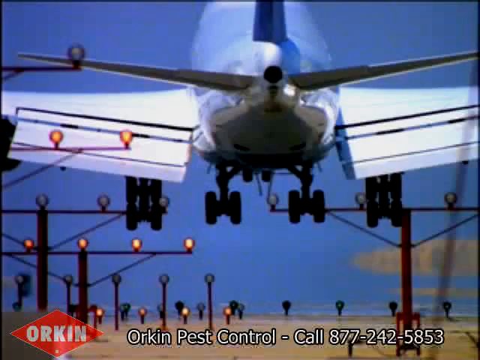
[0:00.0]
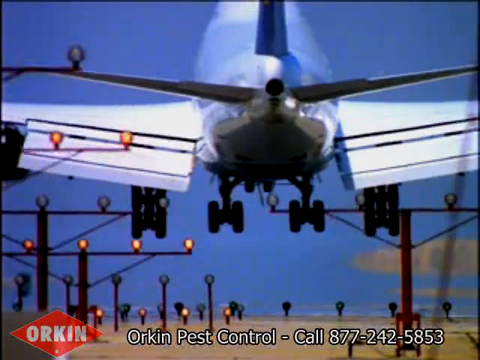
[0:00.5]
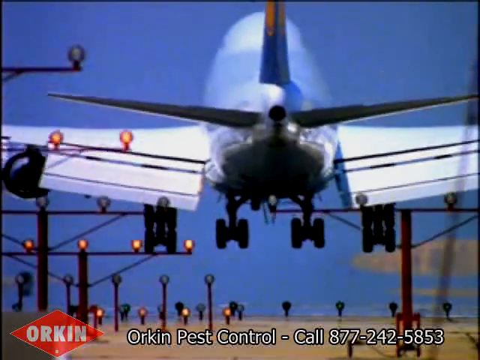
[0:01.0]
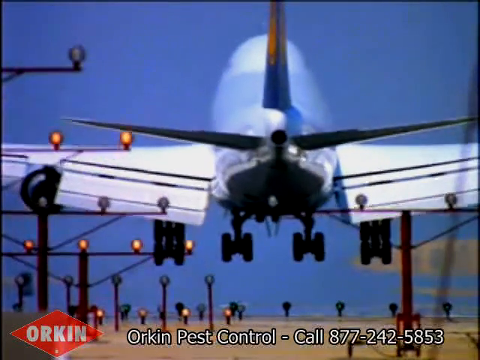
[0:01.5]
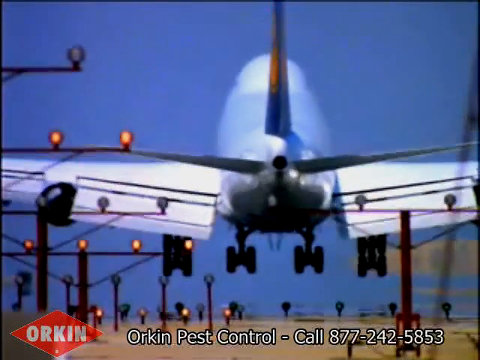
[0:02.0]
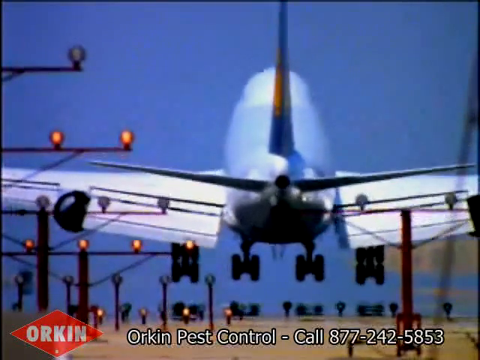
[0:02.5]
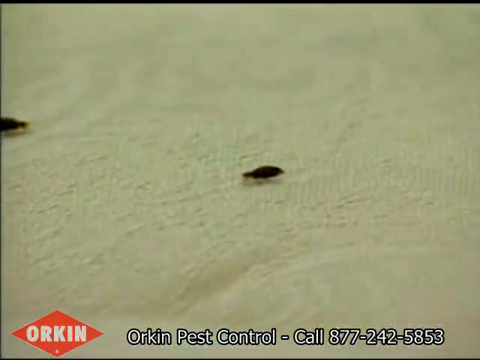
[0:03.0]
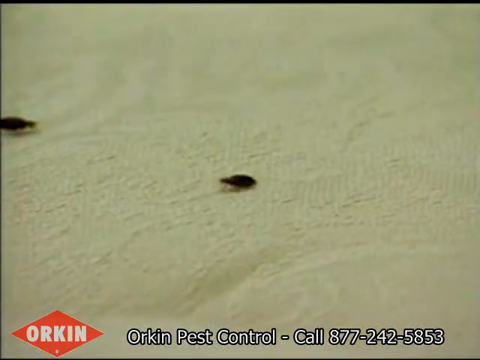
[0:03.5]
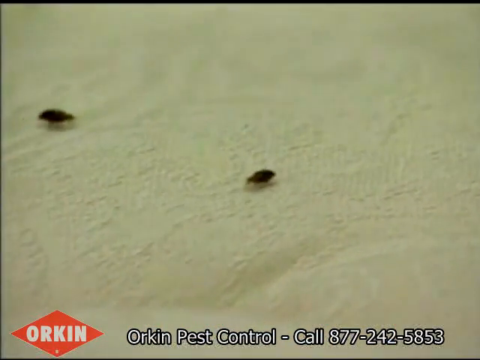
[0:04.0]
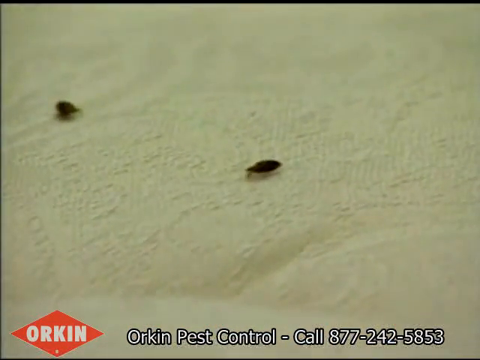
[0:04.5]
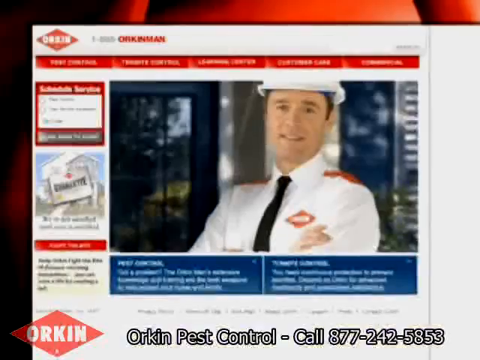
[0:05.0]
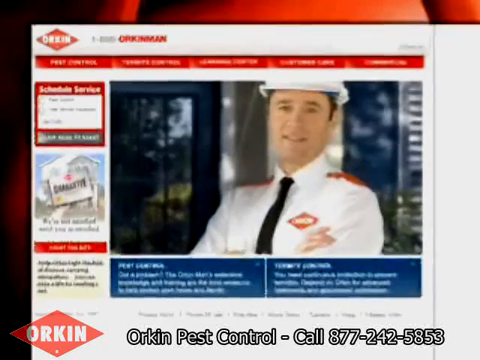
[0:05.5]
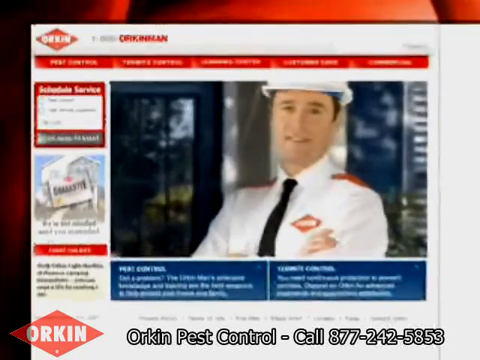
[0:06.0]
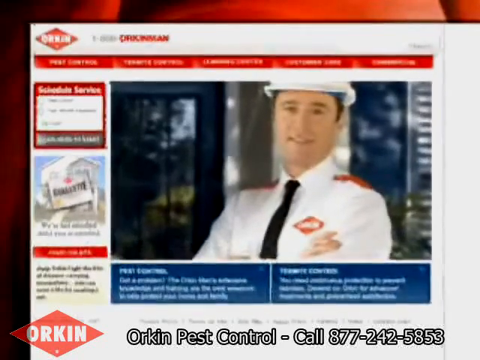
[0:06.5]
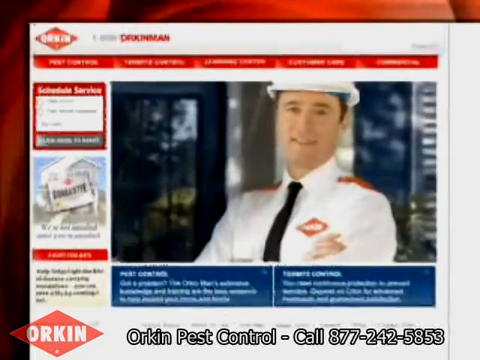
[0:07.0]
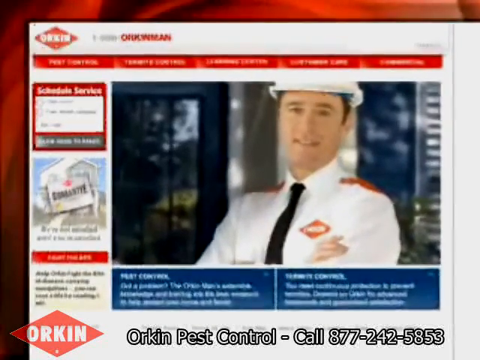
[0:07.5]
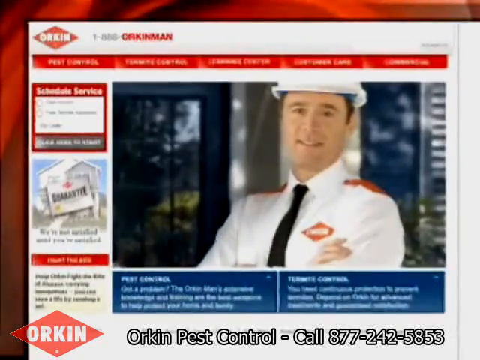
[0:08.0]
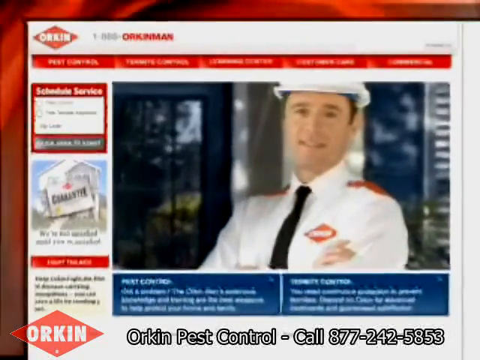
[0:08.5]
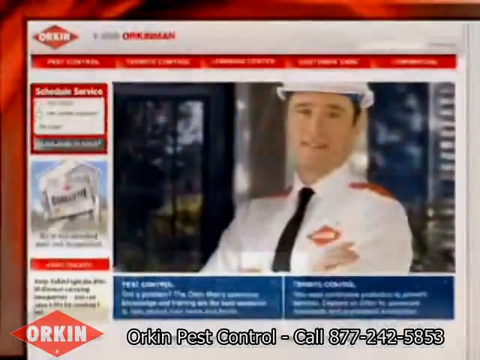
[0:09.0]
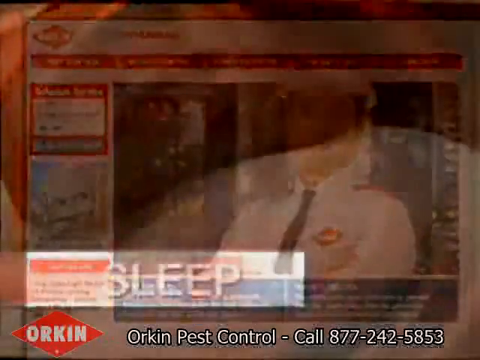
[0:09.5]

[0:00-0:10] A view shows what look like telephone lines or something similar, and an airplane seems to be coming down on the runway at the bottom of the frame. A red diamond logo is on screen along with text reading "Orkin pest control" and a number to call. The airplane is seen from the back, with its sets of wheels visible. The video then moves to a wall with a few different bugs moving around. A very blurred shot follows, showing the Orkin website, which is hard to read. A man in a hard hat, apparently with Orkin, has his arms folded and looks toward the camera as the shot zooms in briefly. The scene then changes to sleep: a woman seems to be trying to sleep, and a man with his eyes closed is trying to sleep while what looks like a single bug is headed to the right of him. The Orkin diamond and the pest control number stay at the bottom of the screen as the ad goes on.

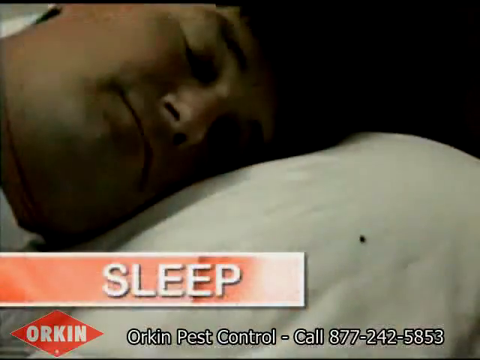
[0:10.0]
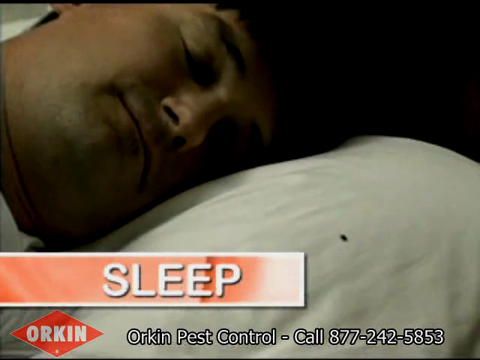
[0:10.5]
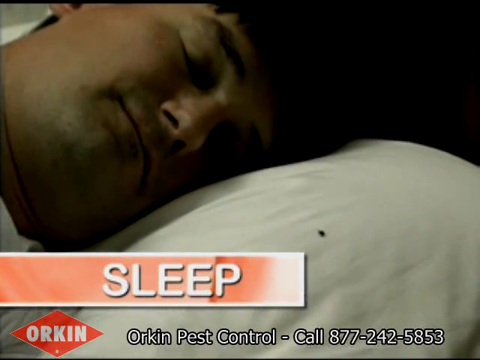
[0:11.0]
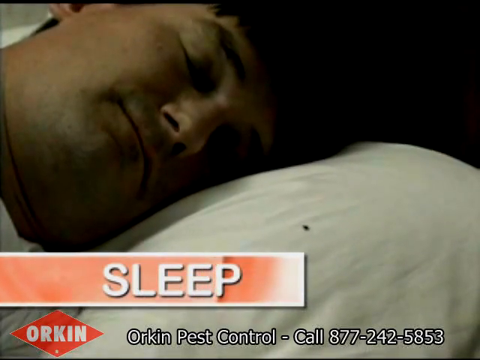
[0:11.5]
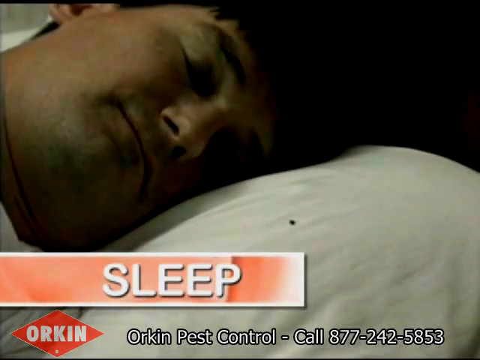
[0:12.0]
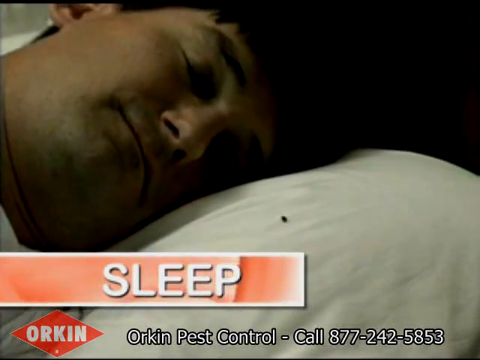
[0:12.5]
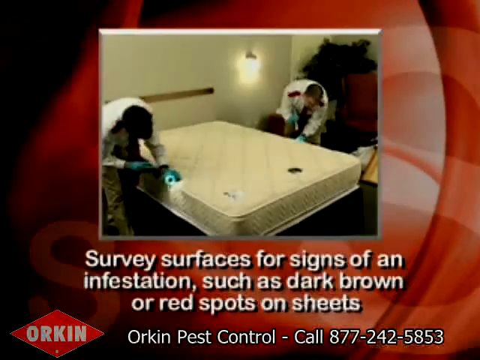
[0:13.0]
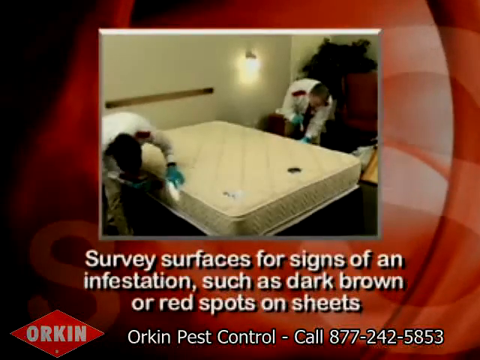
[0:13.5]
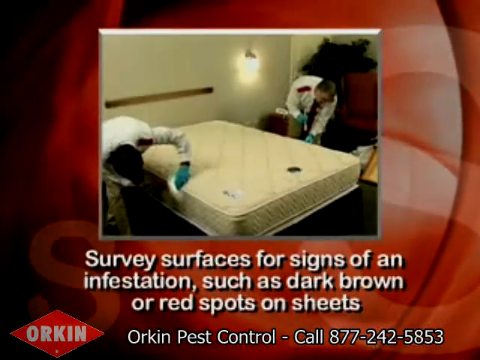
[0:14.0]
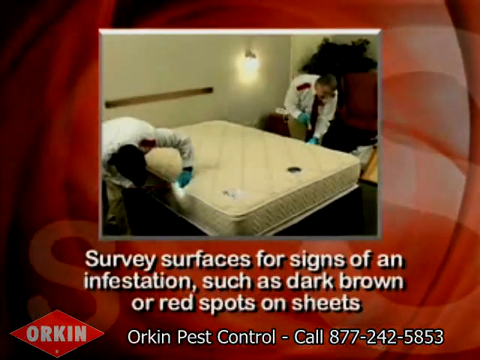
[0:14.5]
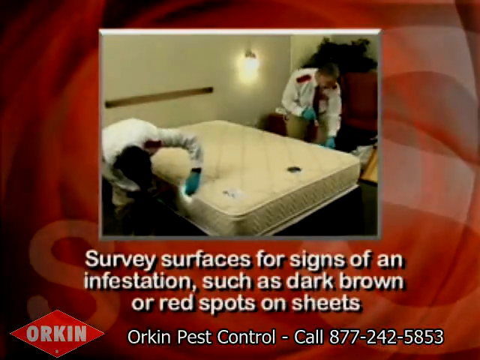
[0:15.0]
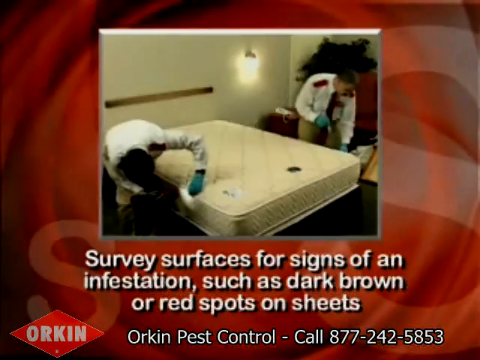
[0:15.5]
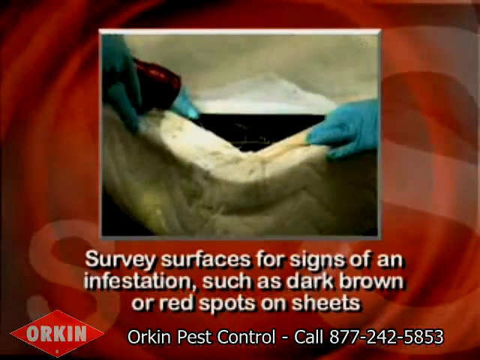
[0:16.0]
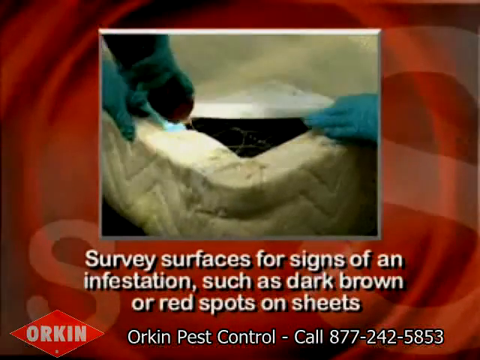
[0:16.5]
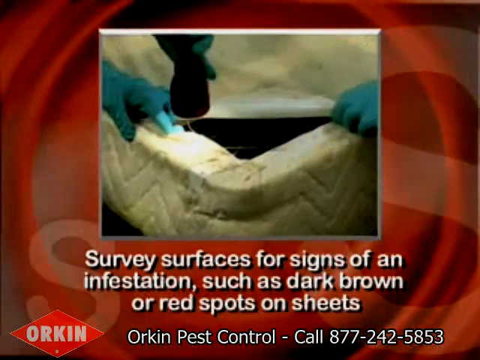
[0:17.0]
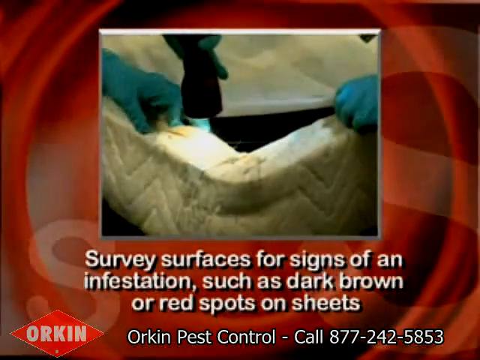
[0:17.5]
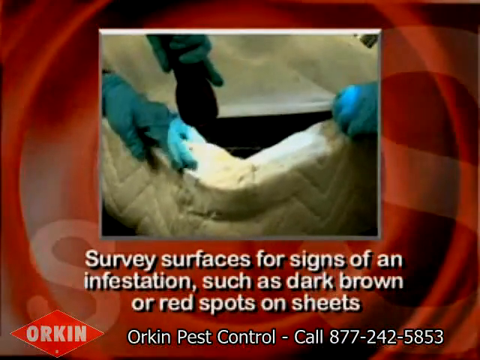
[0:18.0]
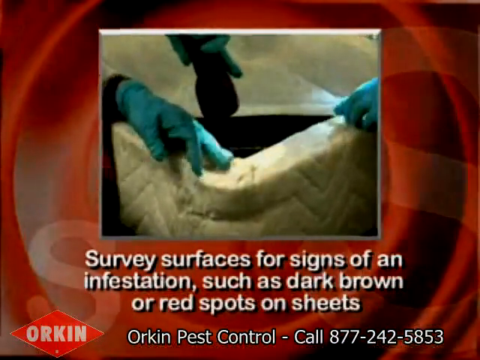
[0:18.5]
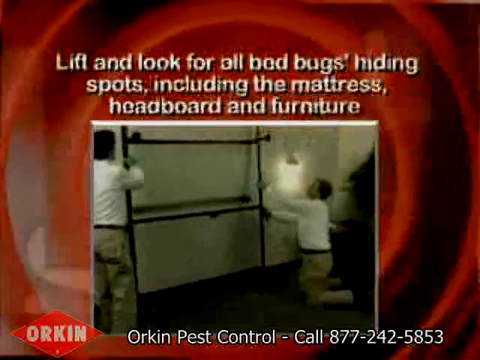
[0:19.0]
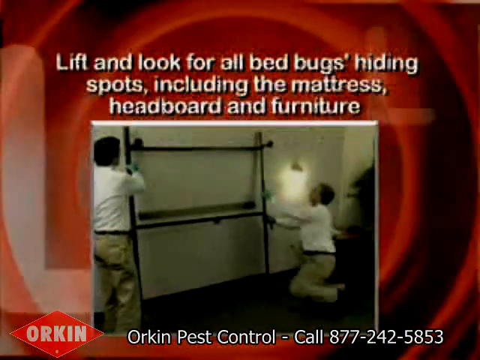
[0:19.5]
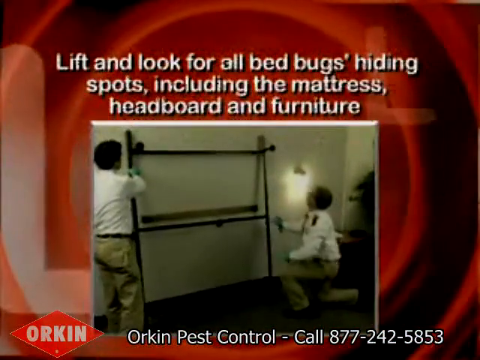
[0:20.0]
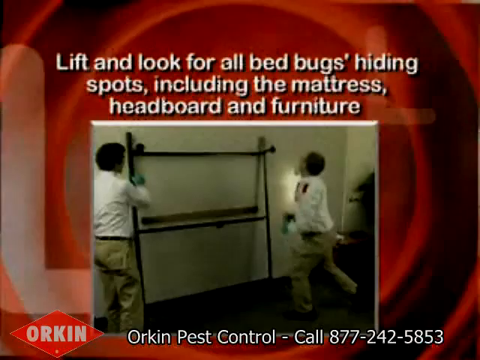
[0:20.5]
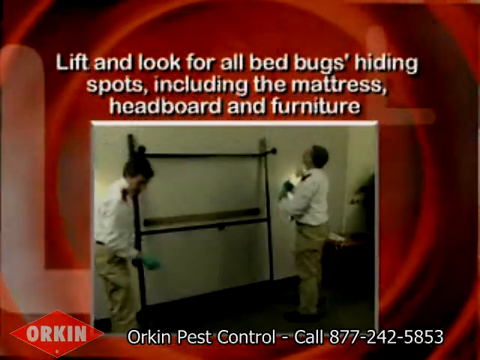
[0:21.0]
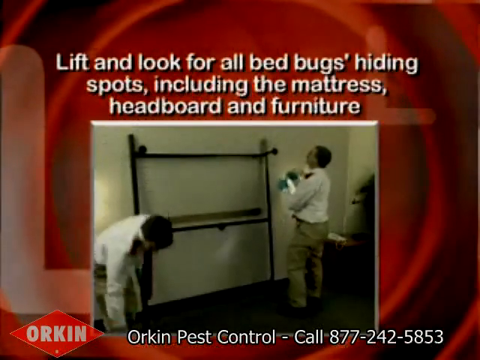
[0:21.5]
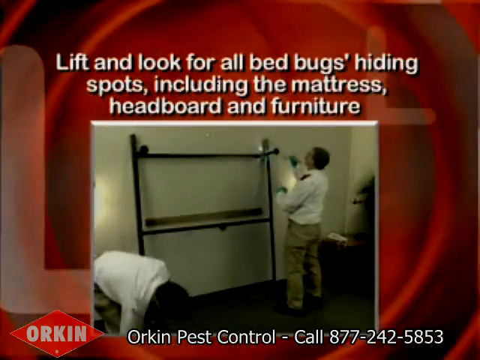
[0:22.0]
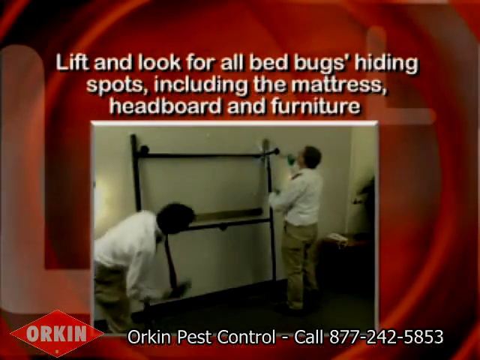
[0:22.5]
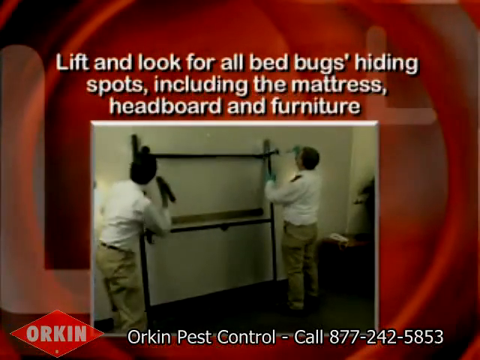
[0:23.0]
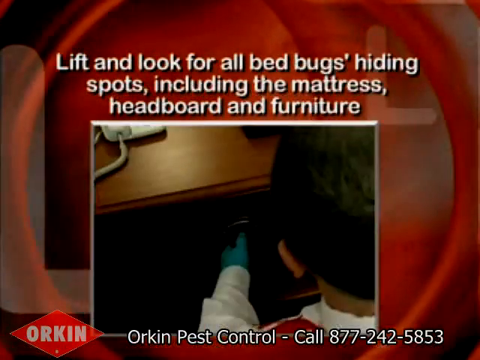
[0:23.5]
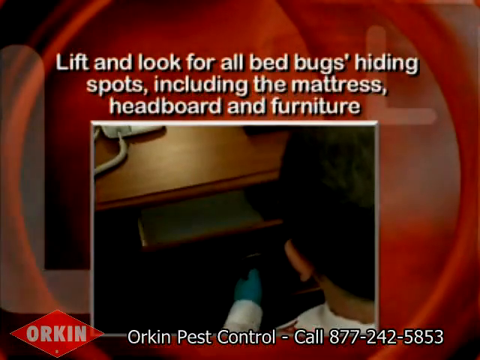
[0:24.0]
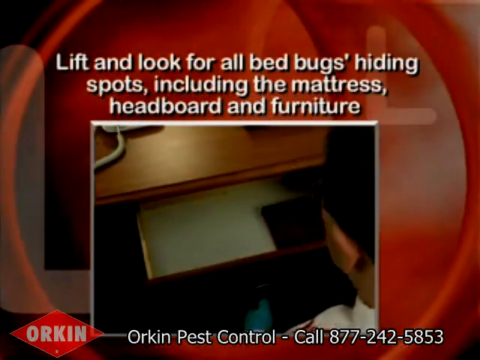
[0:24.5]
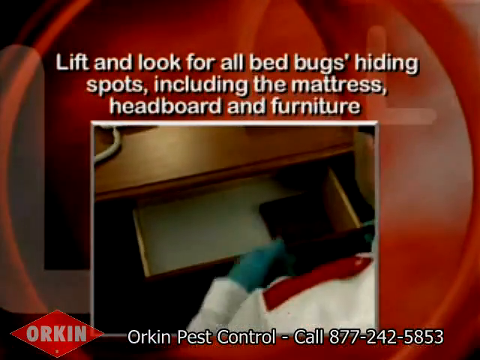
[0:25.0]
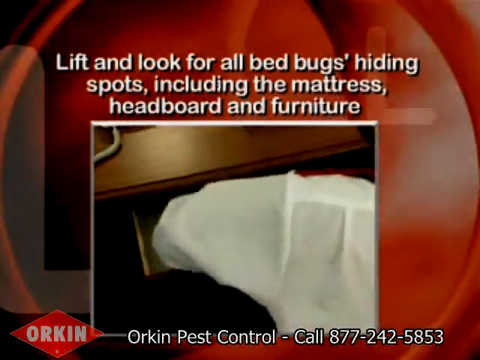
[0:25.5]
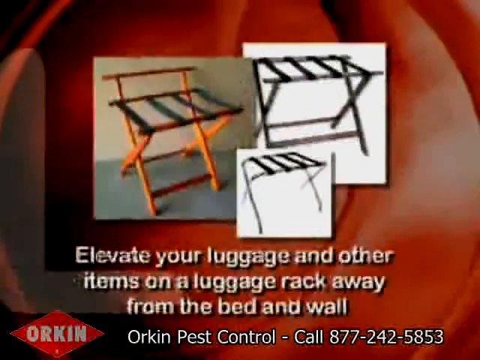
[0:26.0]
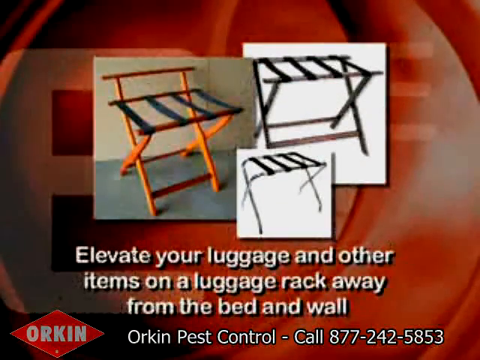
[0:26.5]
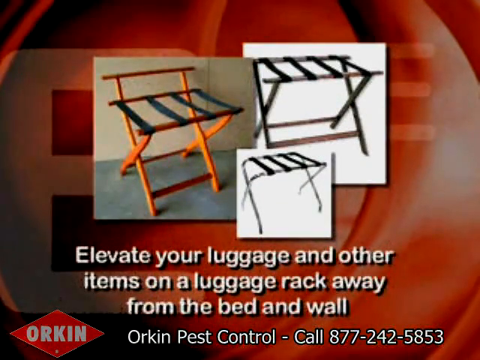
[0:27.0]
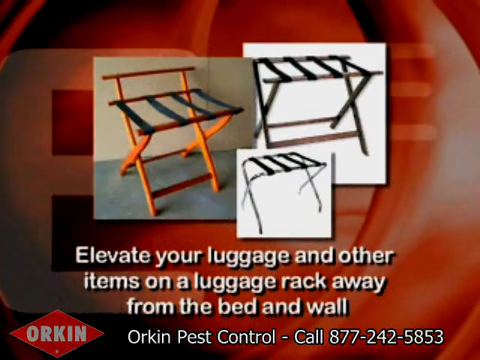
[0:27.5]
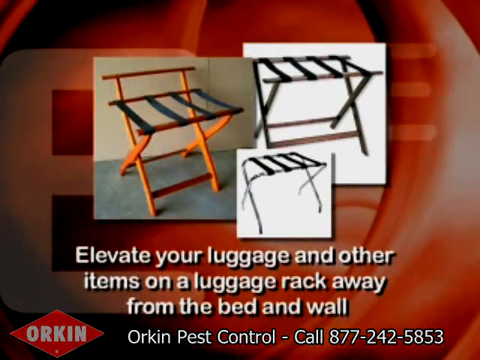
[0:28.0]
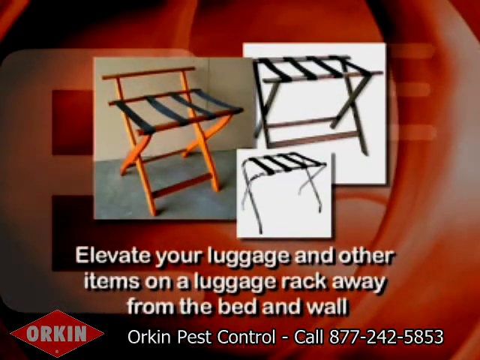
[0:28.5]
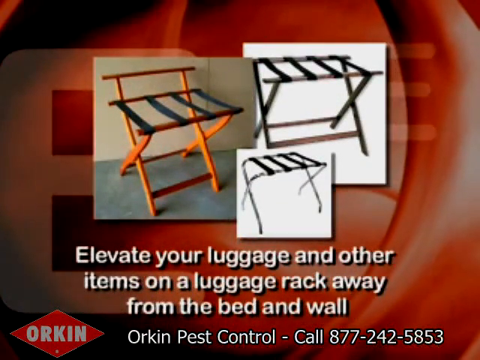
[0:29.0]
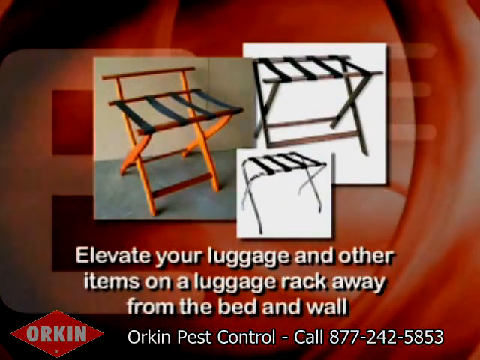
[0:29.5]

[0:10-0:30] The footage has muted colors and looks a little pixelated. The man in bed, who is probably an actor and not really sleeping, appears to be wearing a white shirt. The word "sleep" is centered on screen in a faint light red box over the pillowcase, with a darker red diagonal bar running behind it from left to right. Two different Orkin men wearing gloves then lift the mattress in different spots and use a flashlight to look for bugs. The sheets have been stripped off. Text underneath reads "survey surfaces for signs of an infestation" and "any dark brown or red spots". One man lifts the mattress and checks with the flashlight, and they almost cut through as they look through individual parts of the foam mattress. They also inspect the bed frame, which stands upright against the wall, and pull out drawers to check them. Text about infestation appears, and clothes and luggage are apparently raised up onto something high, away from the bed and the wall.